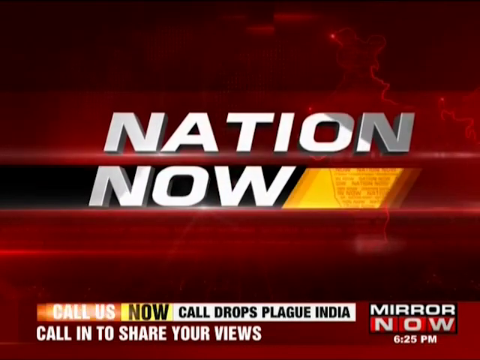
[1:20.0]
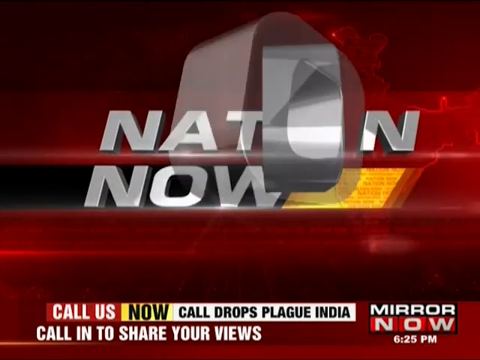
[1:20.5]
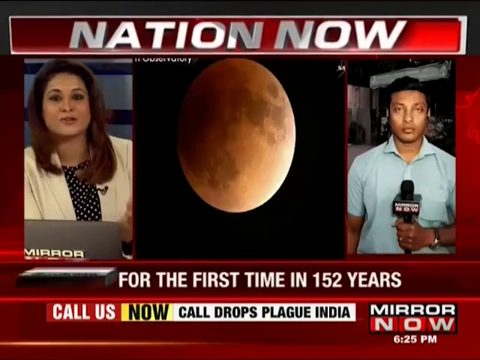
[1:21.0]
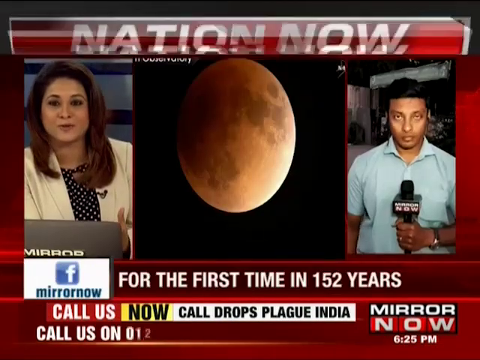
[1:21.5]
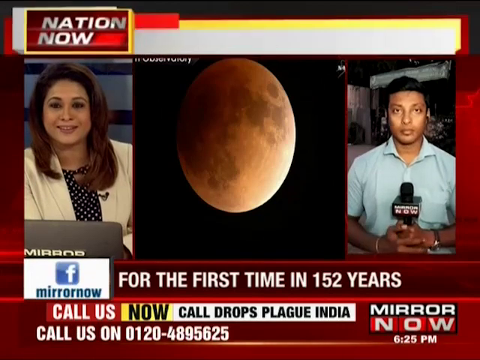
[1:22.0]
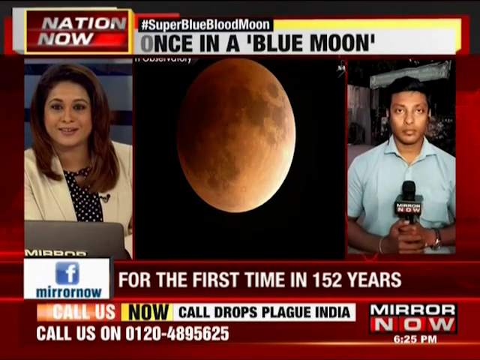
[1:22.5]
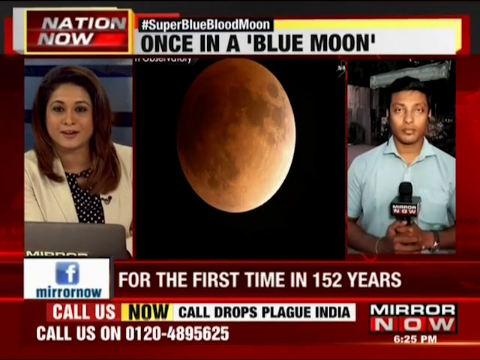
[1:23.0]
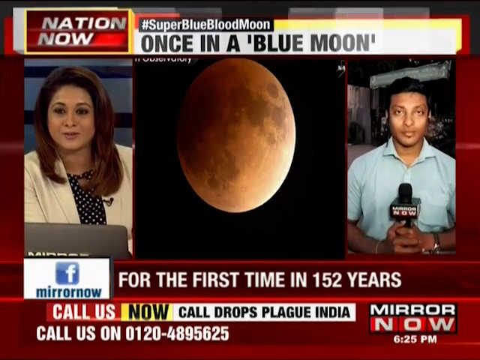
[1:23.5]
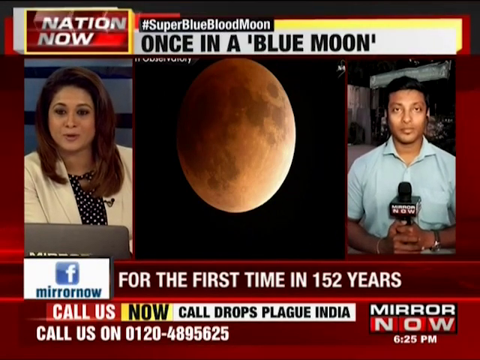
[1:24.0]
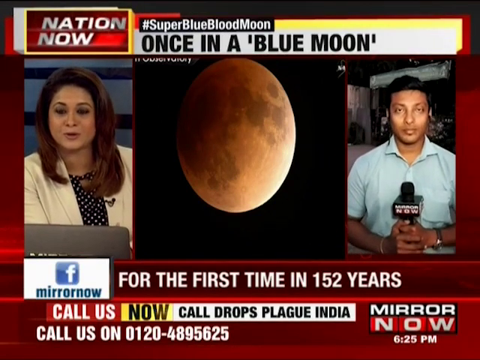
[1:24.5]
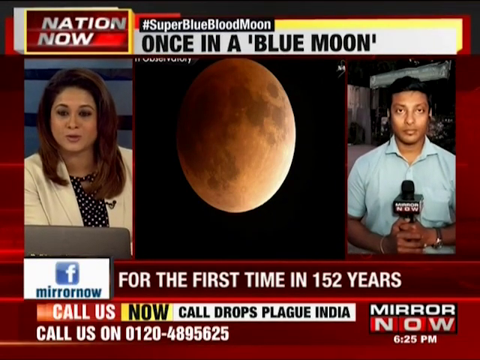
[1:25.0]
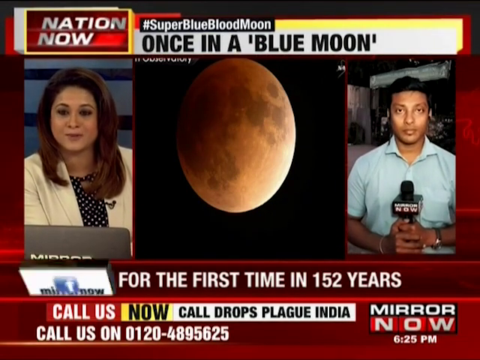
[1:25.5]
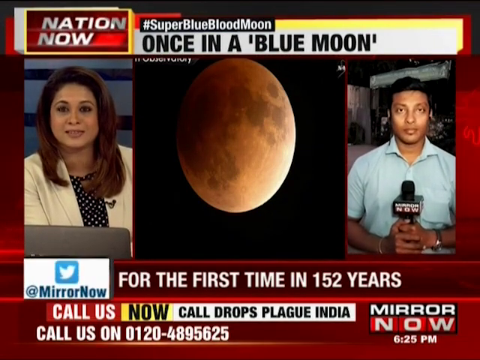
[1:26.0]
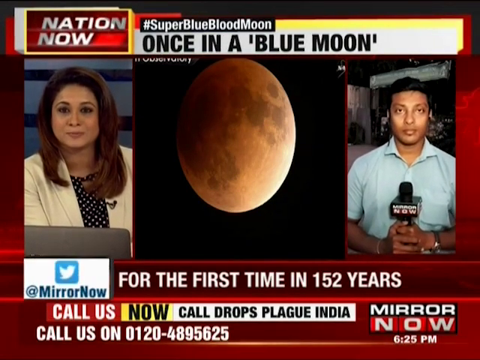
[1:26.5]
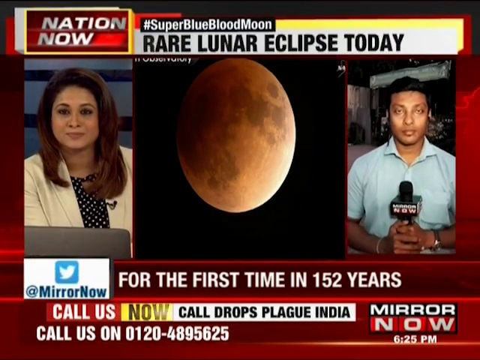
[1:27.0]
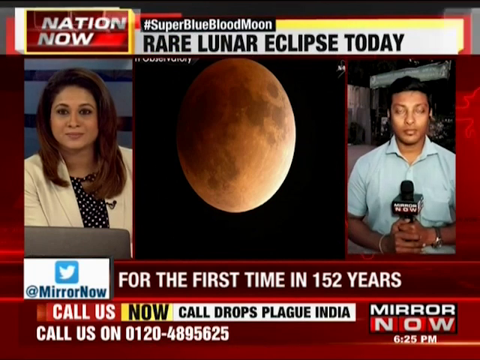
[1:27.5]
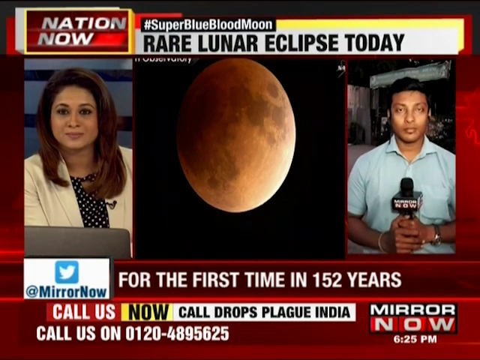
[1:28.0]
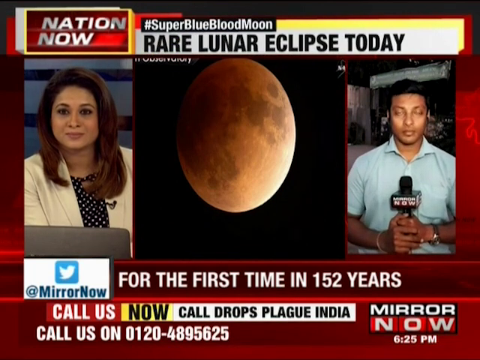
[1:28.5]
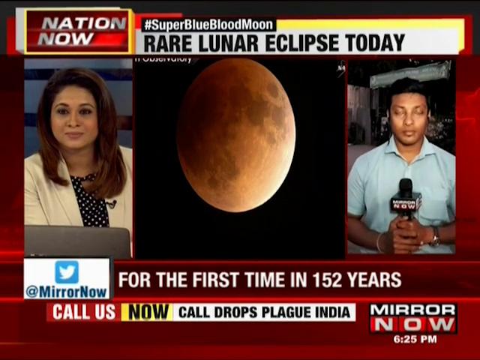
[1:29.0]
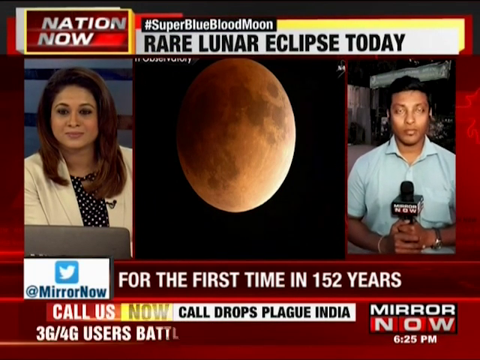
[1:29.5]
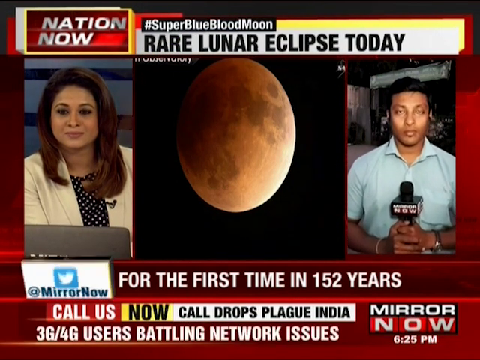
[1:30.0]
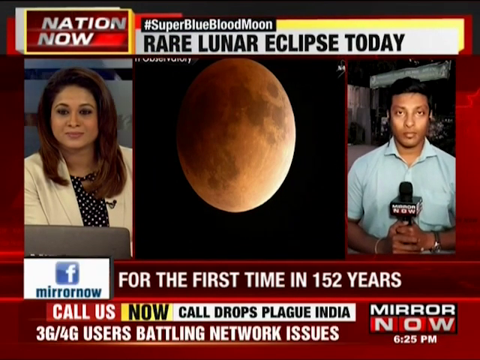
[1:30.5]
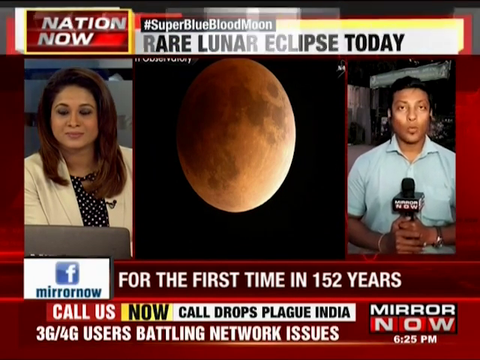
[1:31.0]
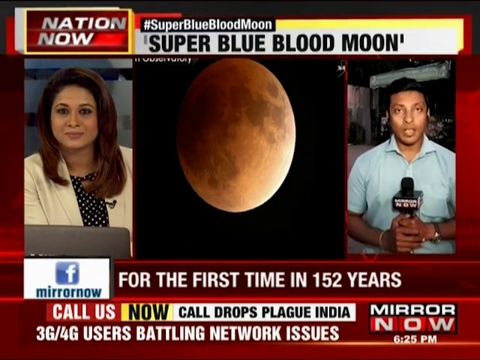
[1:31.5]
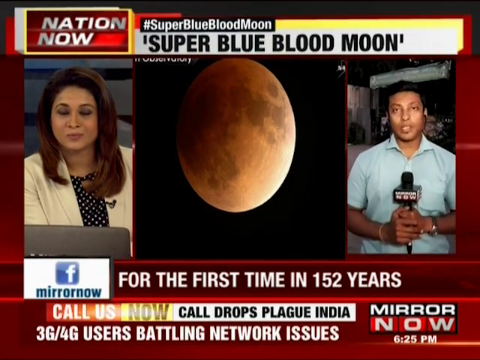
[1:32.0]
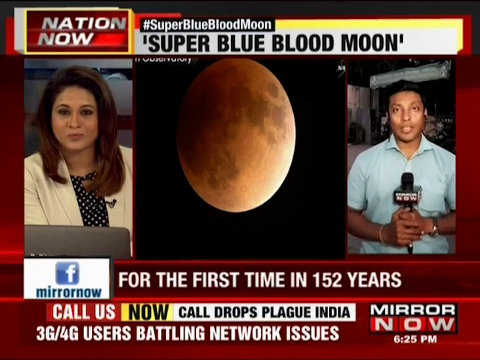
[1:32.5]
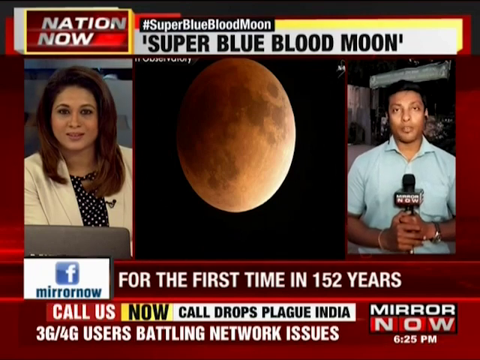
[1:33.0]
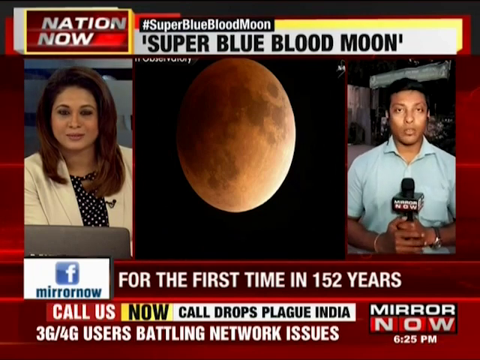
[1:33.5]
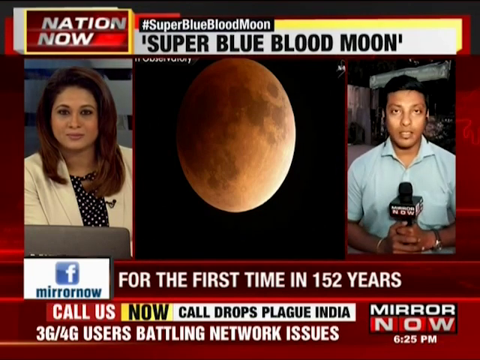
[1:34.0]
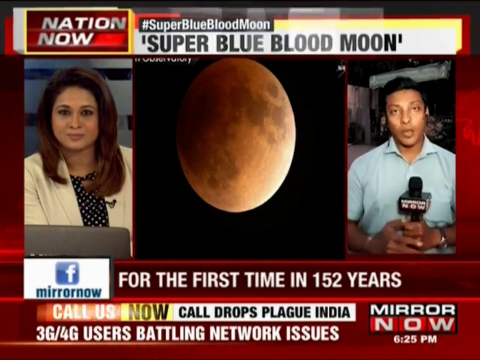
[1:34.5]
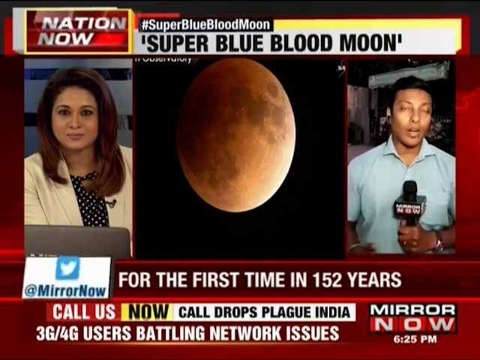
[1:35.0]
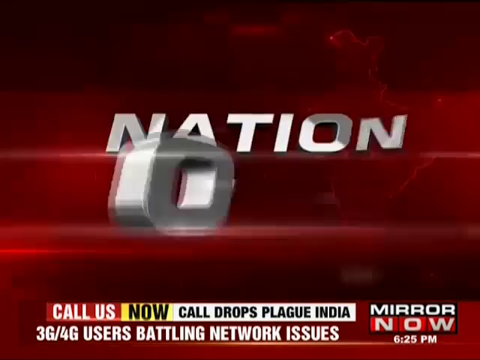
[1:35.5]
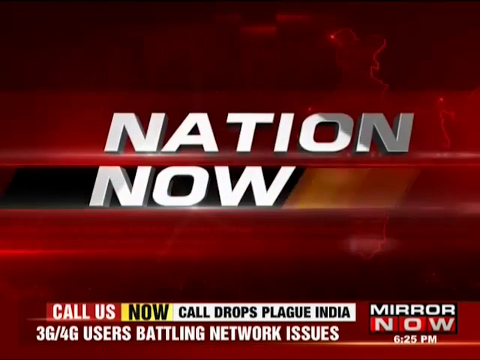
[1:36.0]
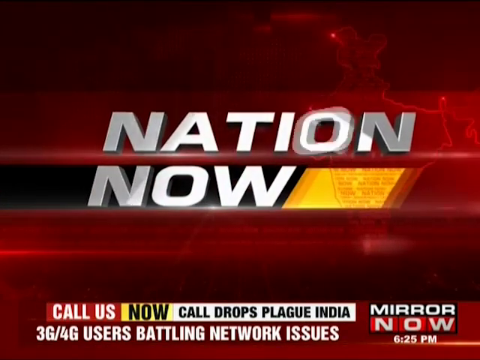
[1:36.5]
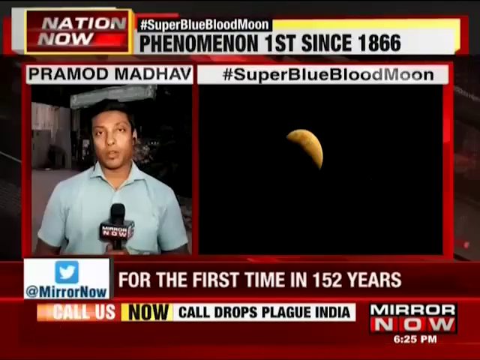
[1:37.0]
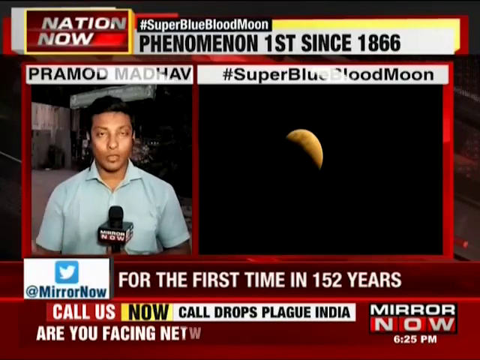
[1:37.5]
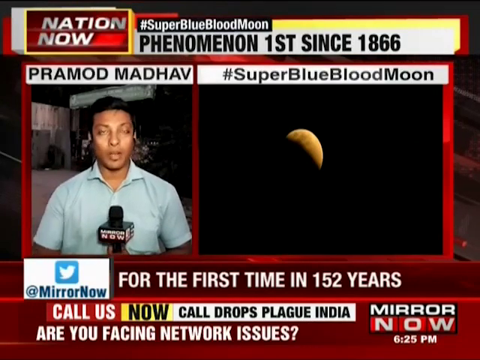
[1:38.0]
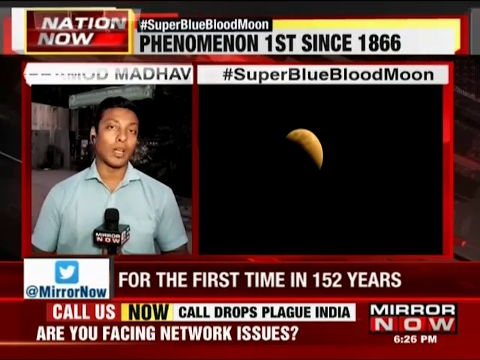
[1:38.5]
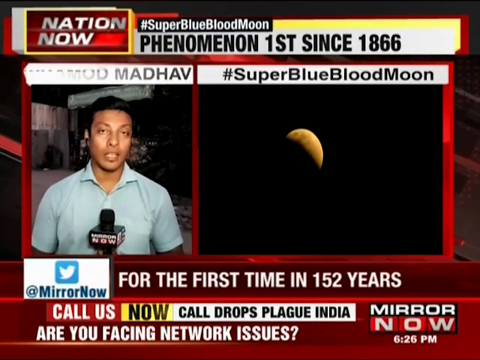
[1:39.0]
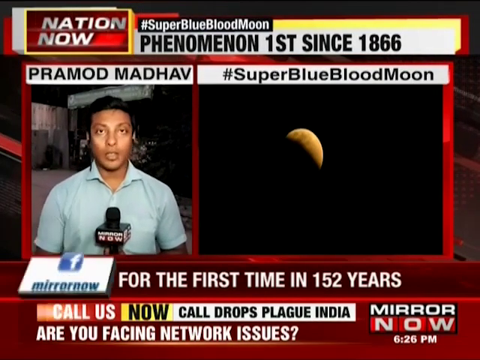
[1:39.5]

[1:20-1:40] The coverage of the rare lunar eclipse and super blue blood moon continues, after 152 years. A man is live, discussing the moon, and live video of the moon is shown; the moon seems to be a little bit red.